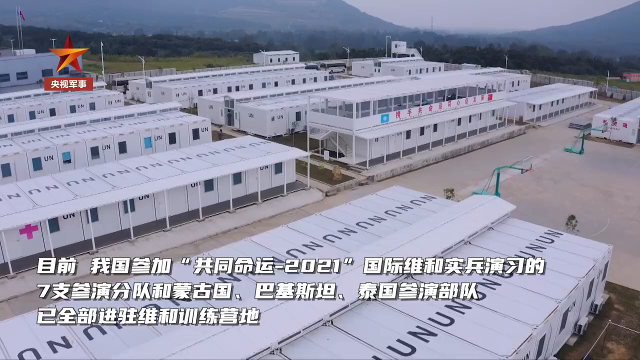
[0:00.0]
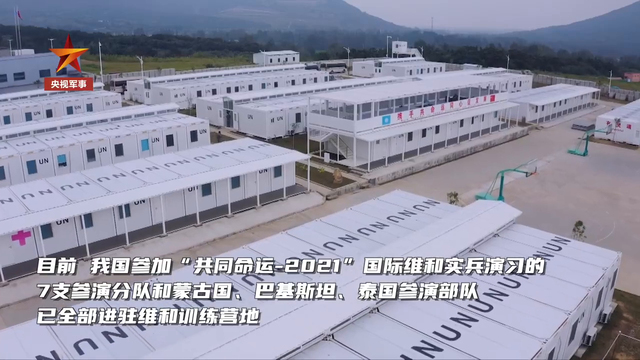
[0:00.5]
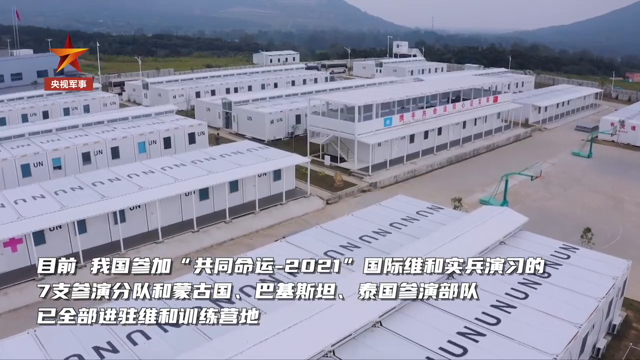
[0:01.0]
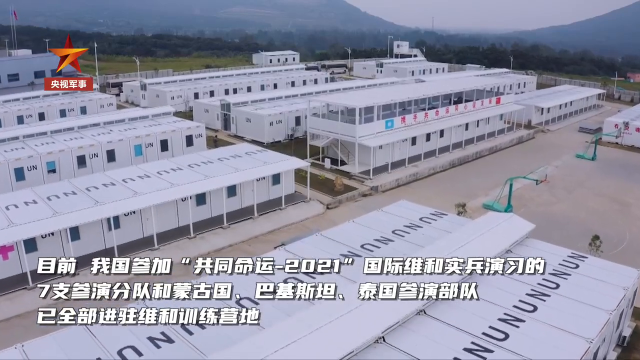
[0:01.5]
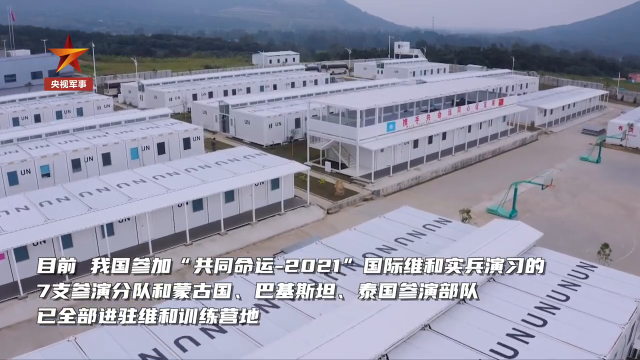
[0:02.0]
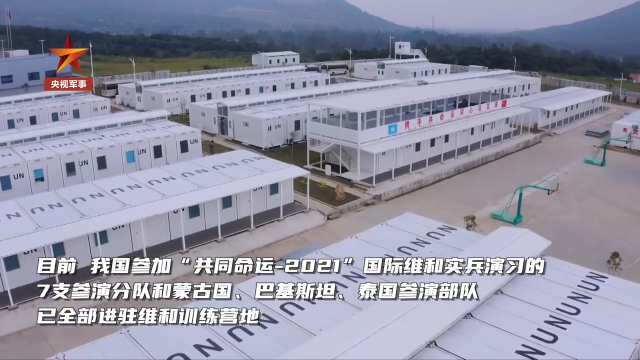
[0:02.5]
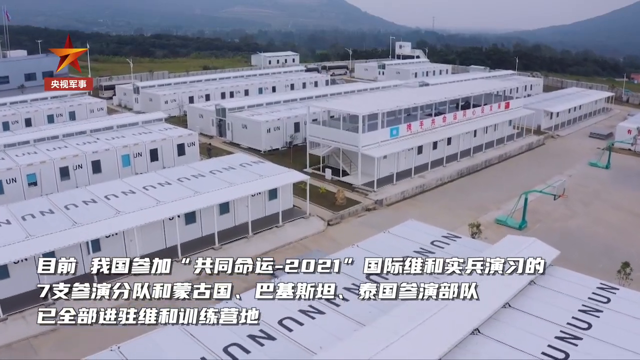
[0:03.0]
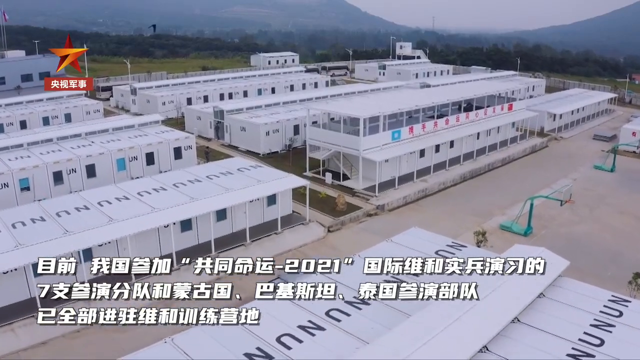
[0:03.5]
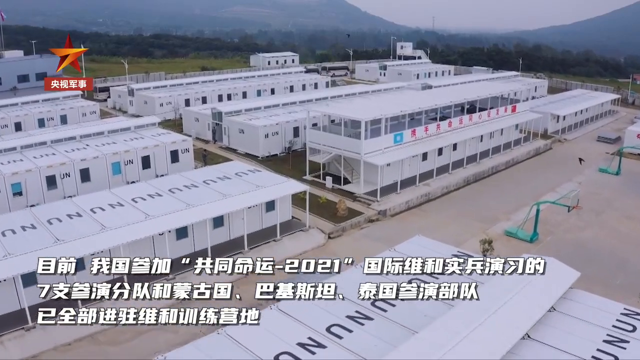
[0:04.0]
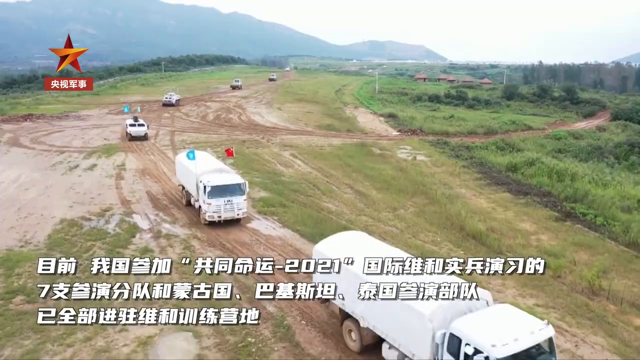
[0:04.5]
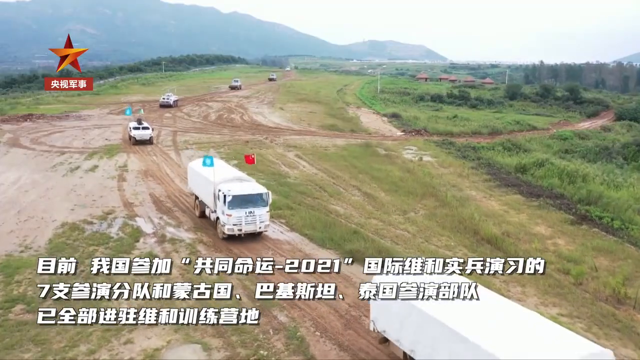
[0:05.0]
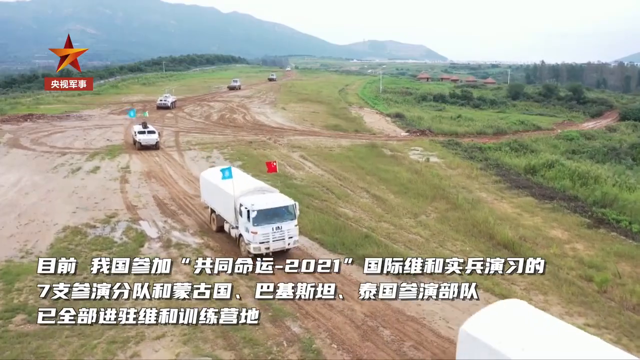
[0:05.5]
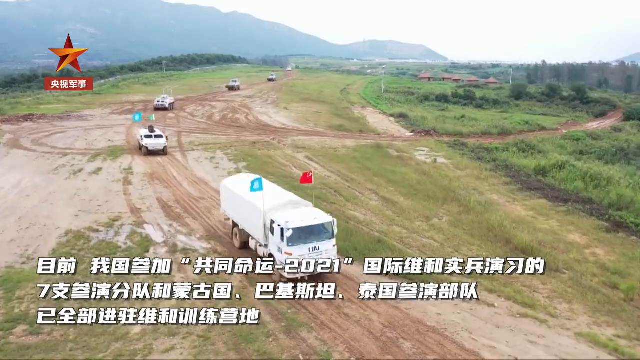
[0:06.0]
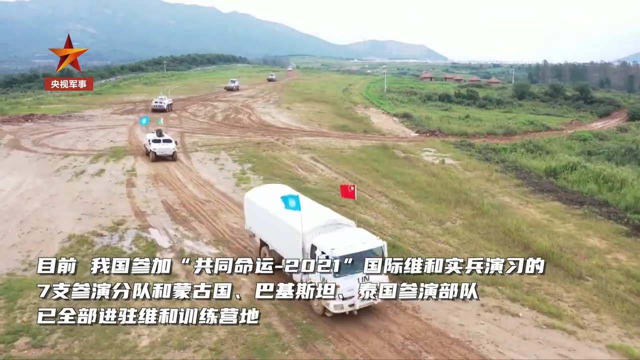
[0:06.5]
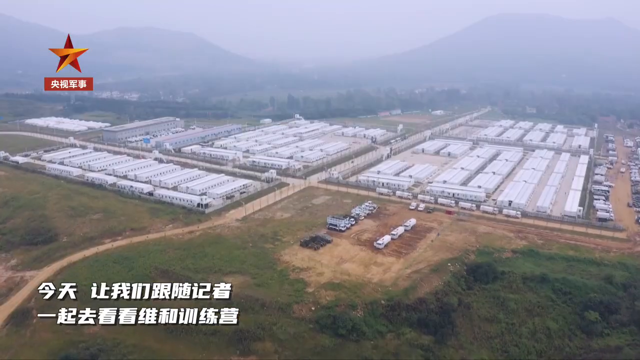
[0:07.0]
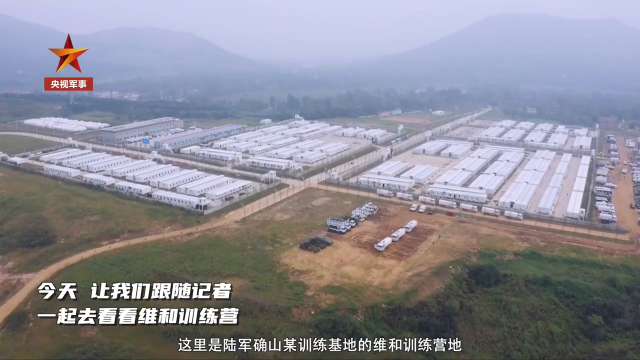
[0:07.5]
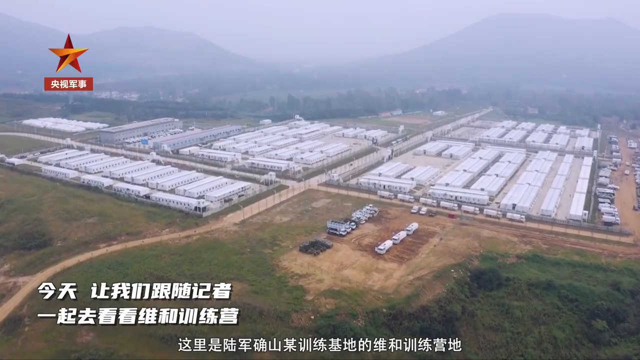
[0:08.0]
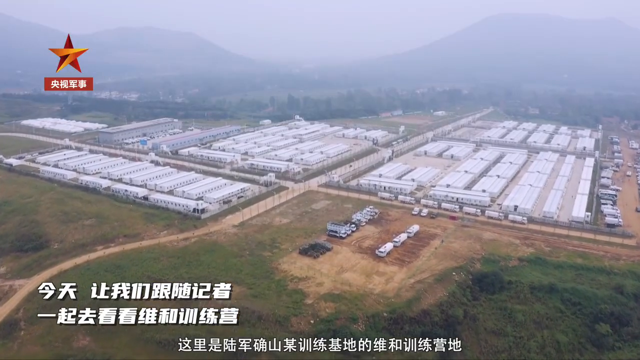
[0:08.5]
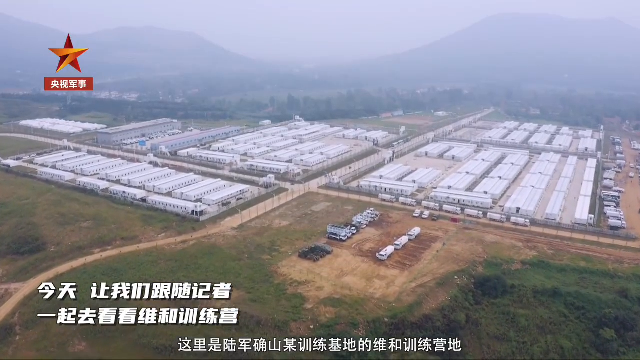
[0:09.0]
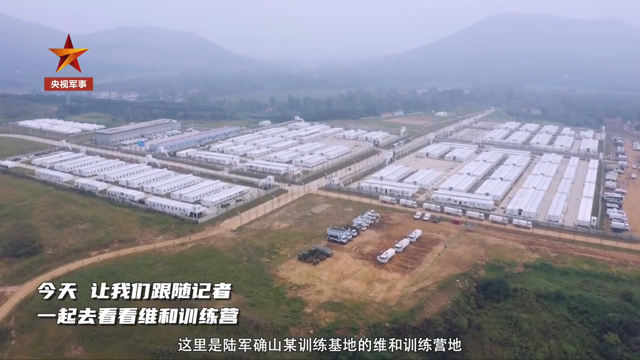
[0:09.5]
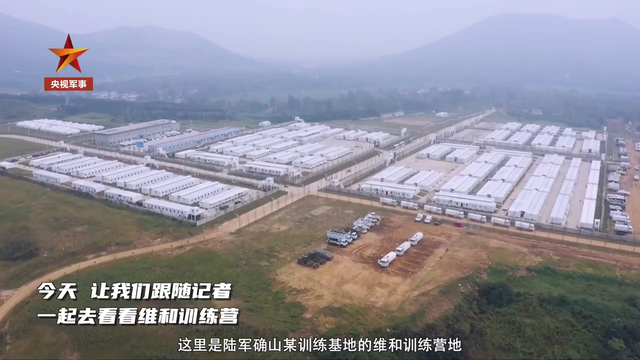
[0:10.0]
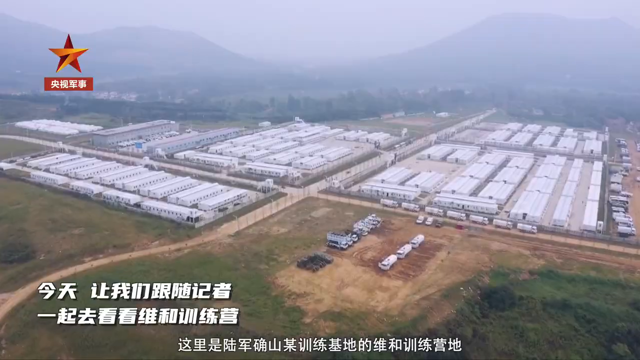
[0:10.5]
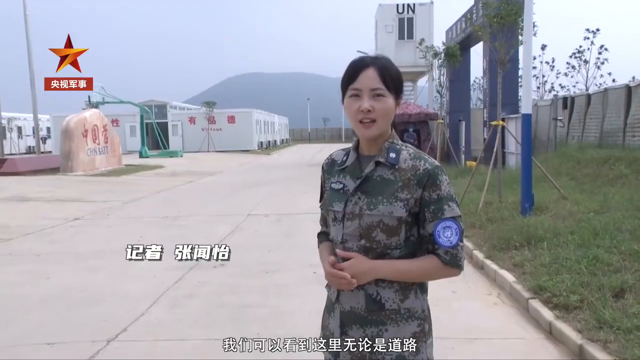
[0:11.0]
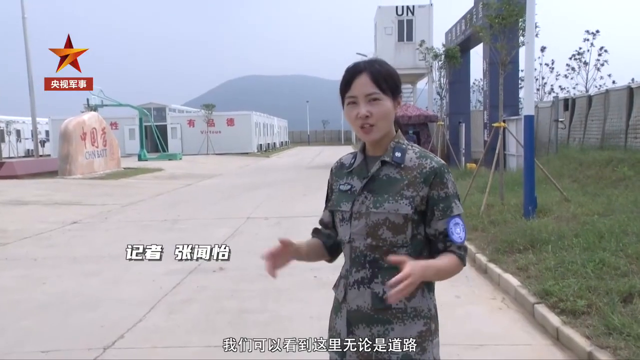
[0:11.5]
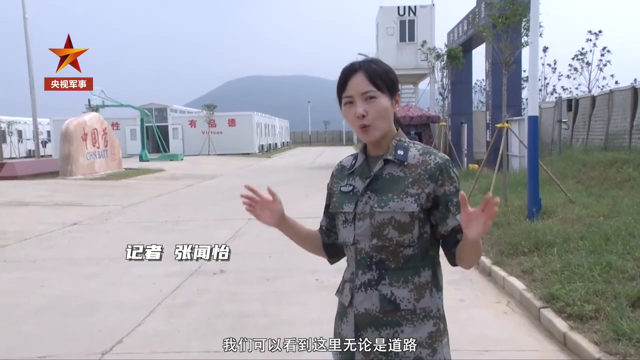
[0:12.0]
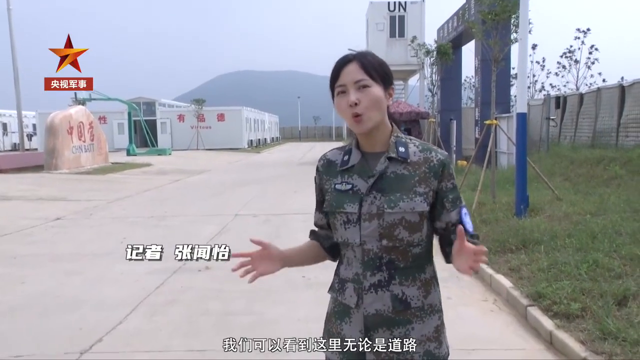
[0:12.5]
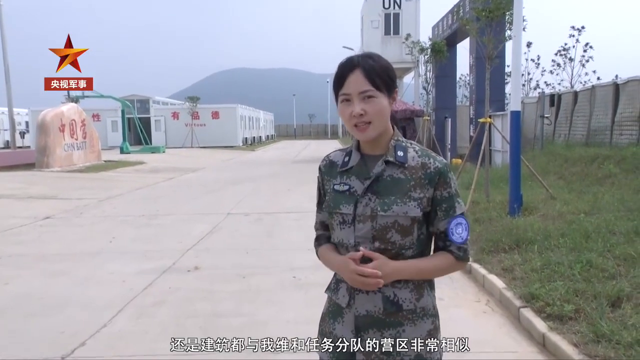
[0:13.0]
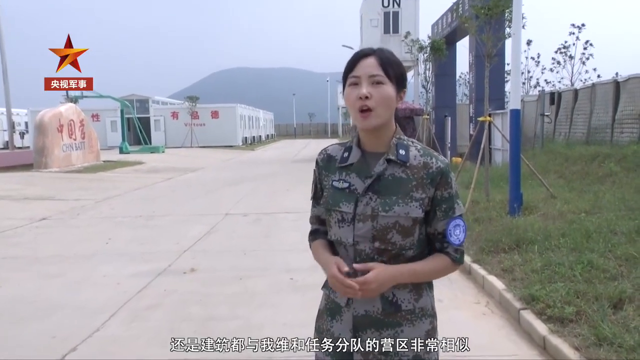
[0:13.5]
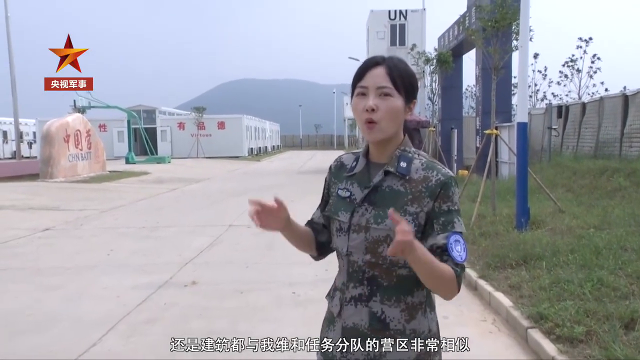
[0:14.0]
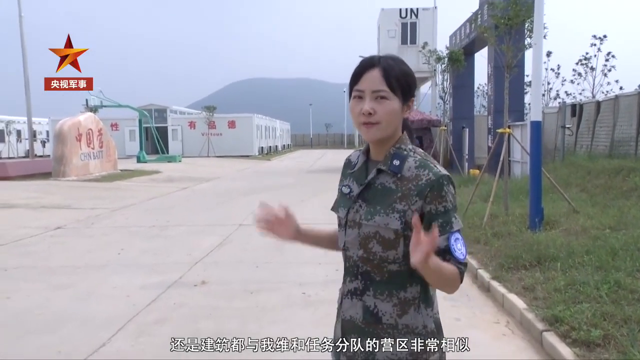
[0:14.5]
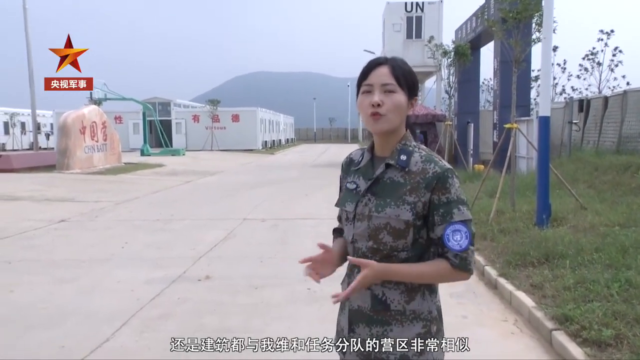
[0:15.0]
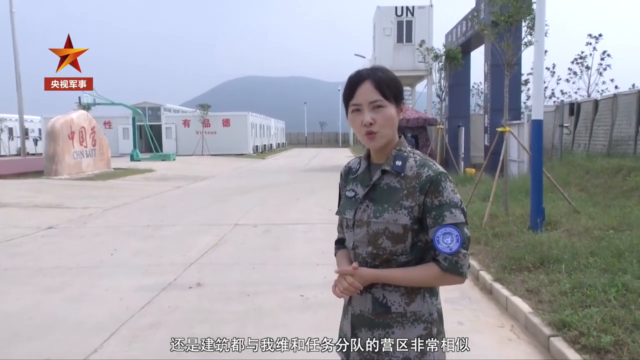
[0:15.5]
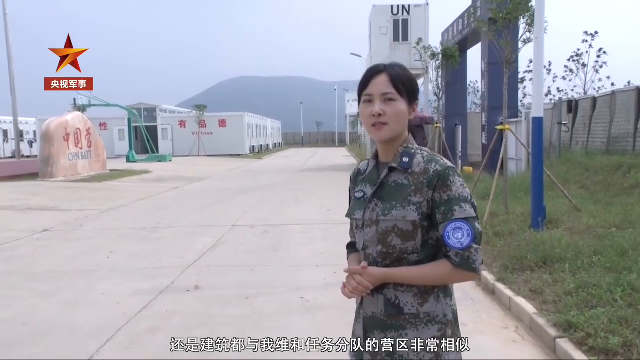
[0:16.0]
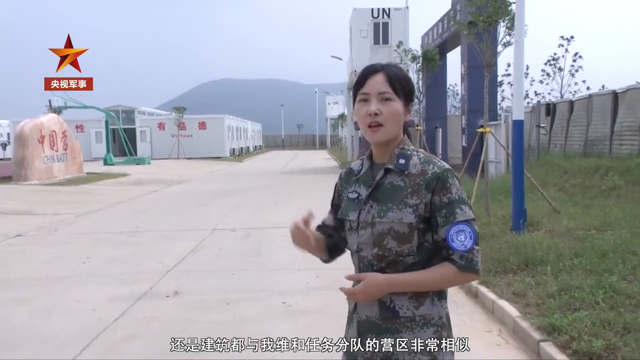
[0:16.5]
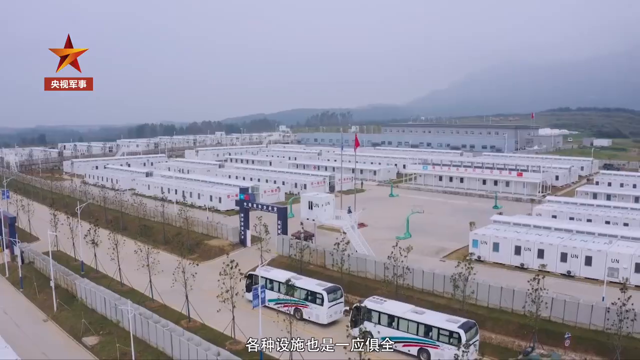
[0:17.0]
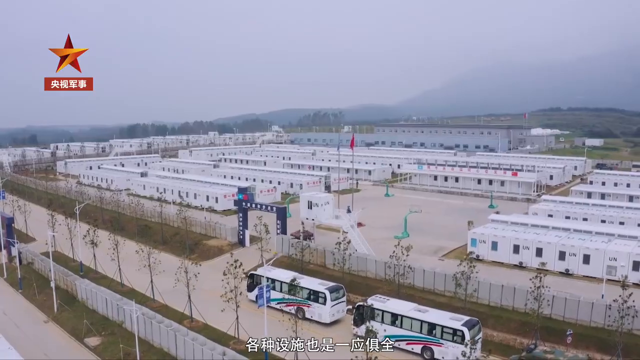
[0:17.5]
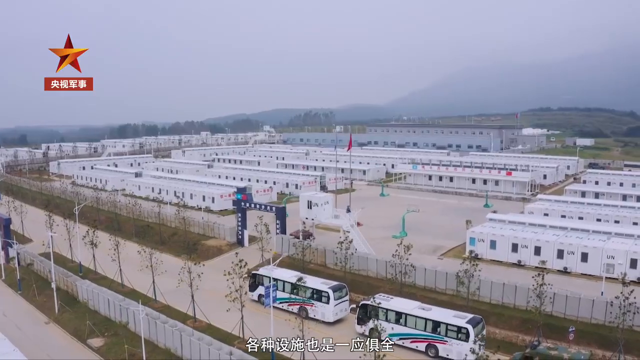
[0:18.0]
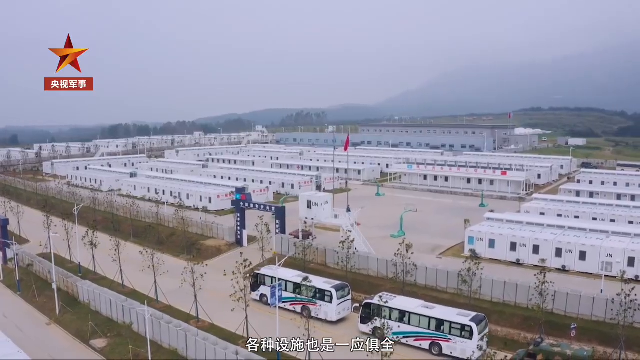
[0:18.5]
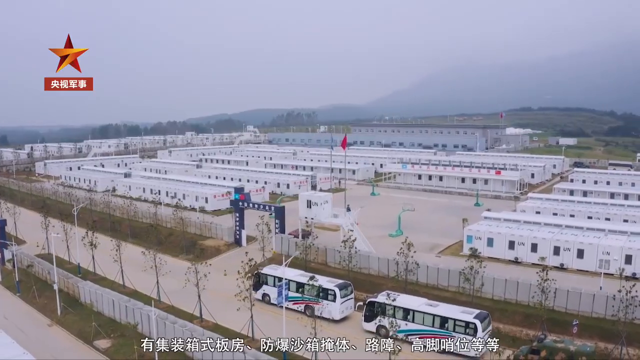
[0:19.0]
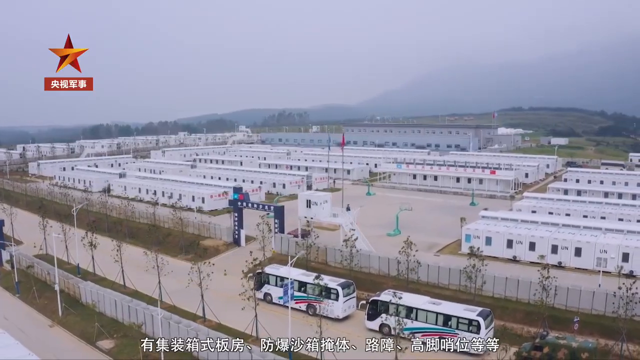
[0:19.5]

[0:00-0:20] Drone footage shows some kind of facility with rows of small cabins, one of which bears what looks like the British Red Cross symbol. There appear to be eight sections of these cabins; they all have small windows and canopies held up with poles, and the whole place looks very clinical. Three lines of East Asian text run along the bottom of the screen. The scene changes to a track with a number of UN vehicles driving down it. The camera then cuts to a young woman who looks to be from East Asia, dressed in a kind of camouflage army jumpsuit. She talks to the camera and signals behind her, where some sort of small lookout tower with UN painted on its side is visible. Another view, possibly drone footage, shows the camp or facility, with a big coach parked just outside the main entrance.